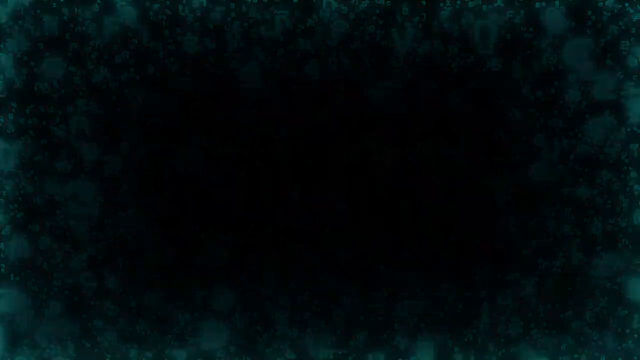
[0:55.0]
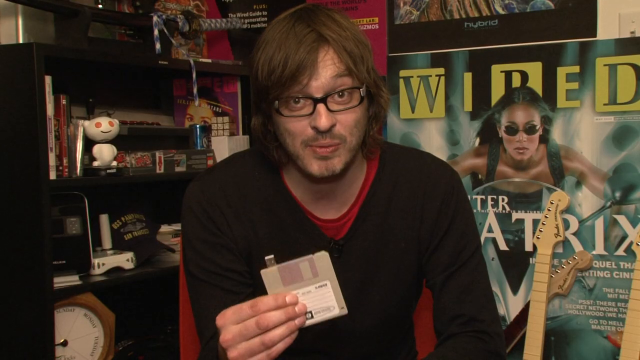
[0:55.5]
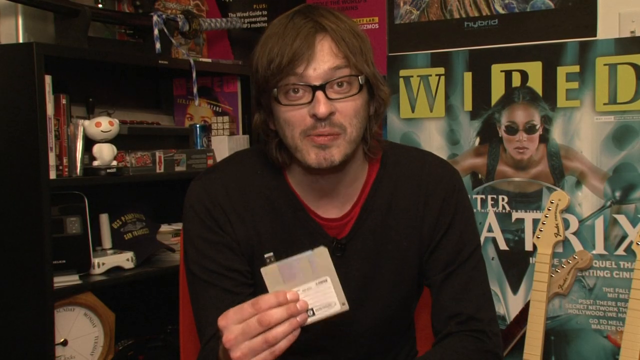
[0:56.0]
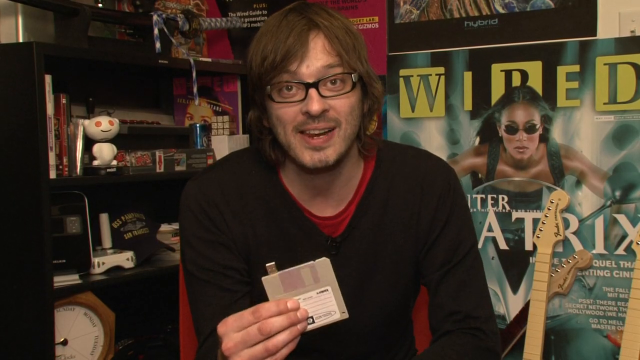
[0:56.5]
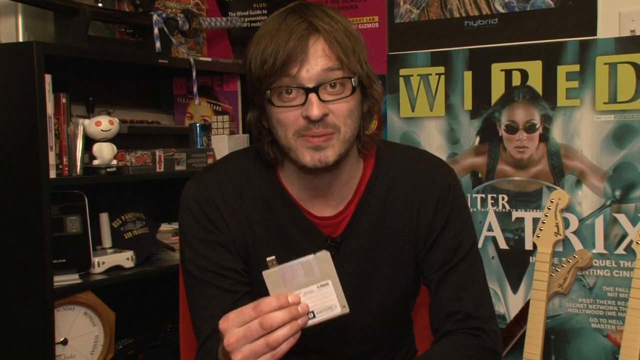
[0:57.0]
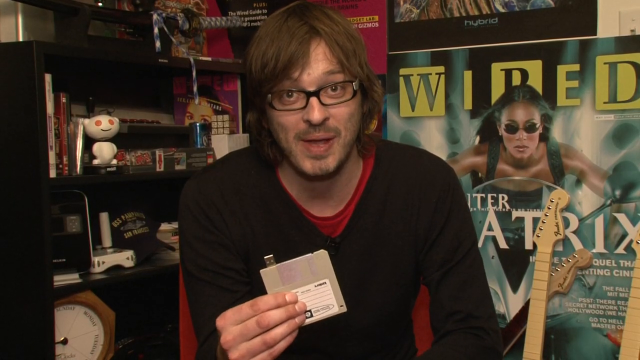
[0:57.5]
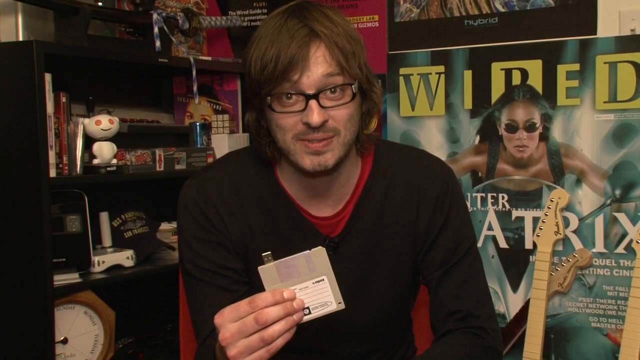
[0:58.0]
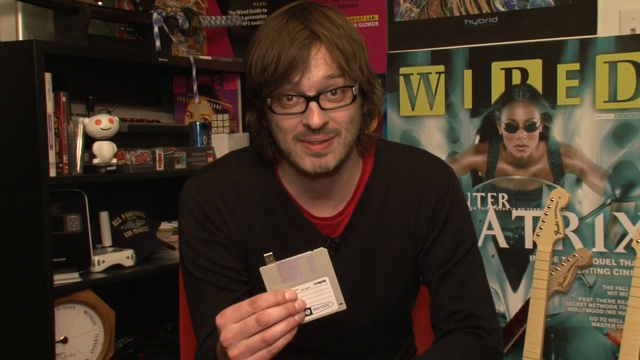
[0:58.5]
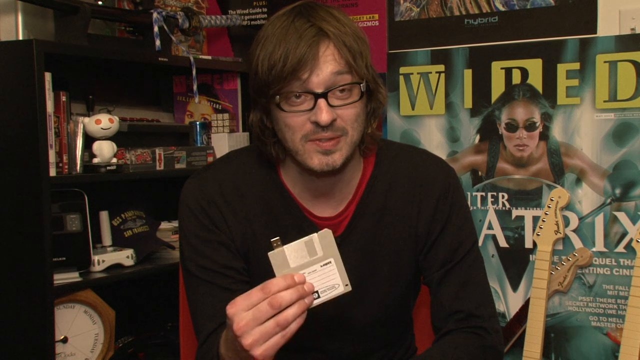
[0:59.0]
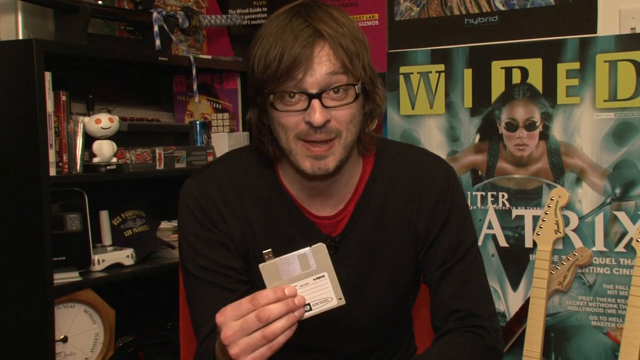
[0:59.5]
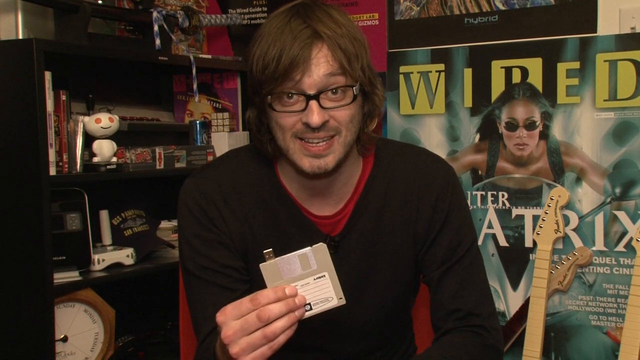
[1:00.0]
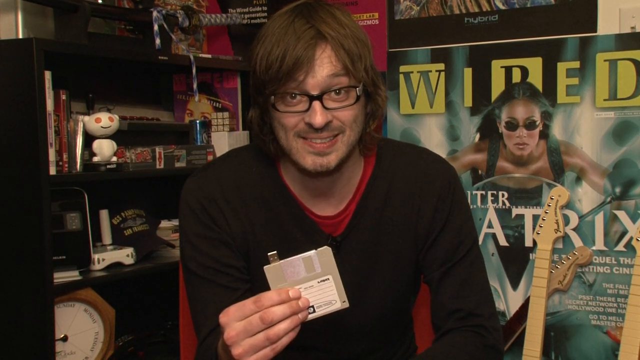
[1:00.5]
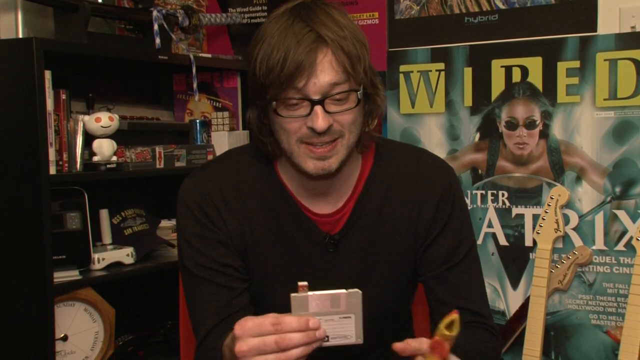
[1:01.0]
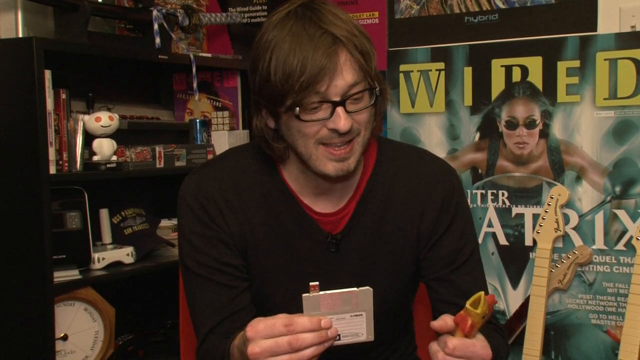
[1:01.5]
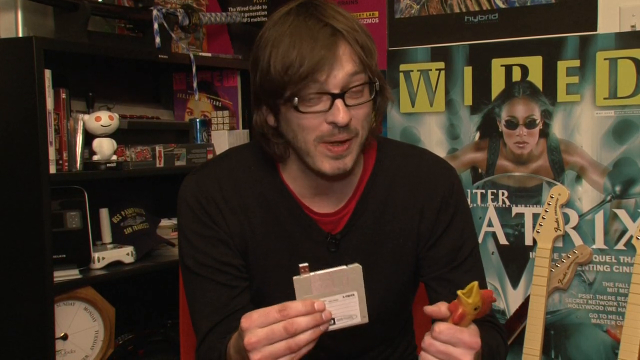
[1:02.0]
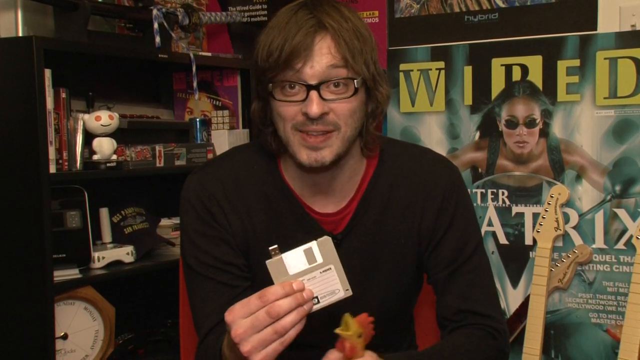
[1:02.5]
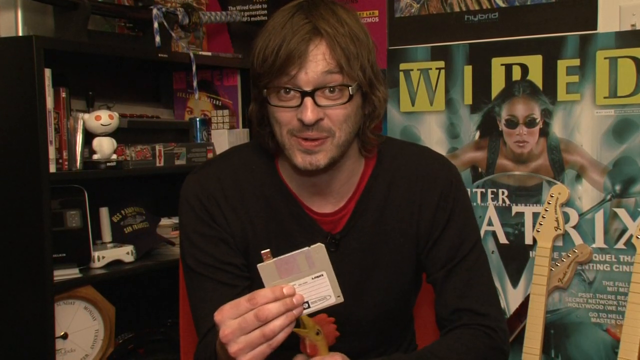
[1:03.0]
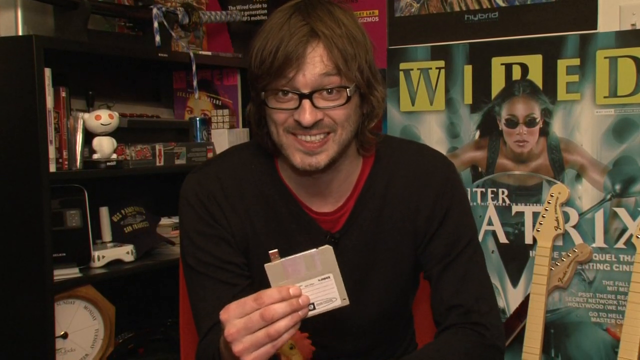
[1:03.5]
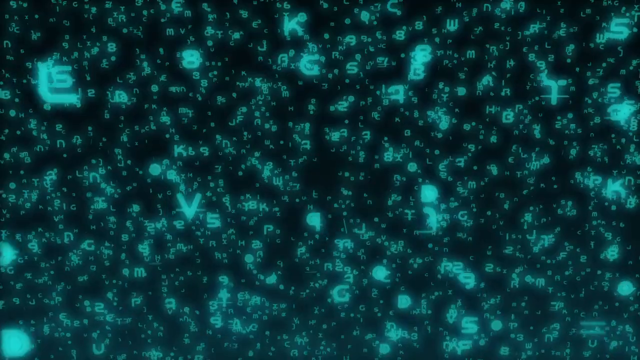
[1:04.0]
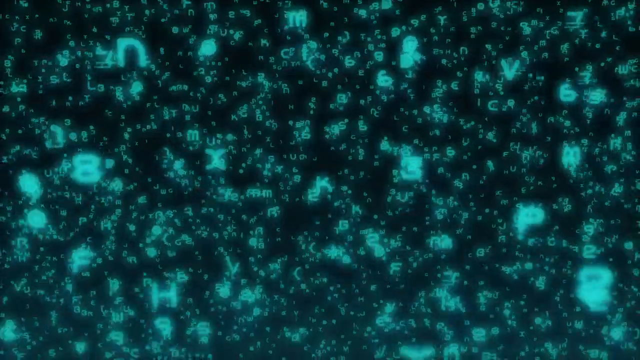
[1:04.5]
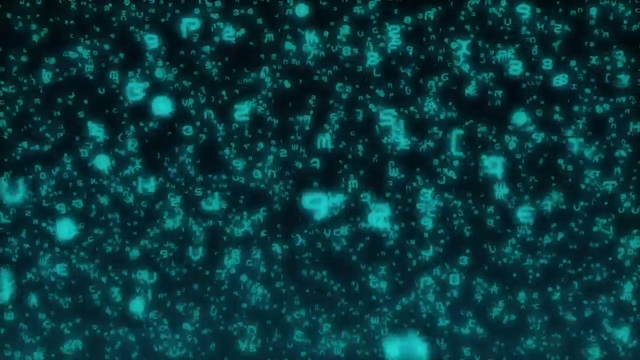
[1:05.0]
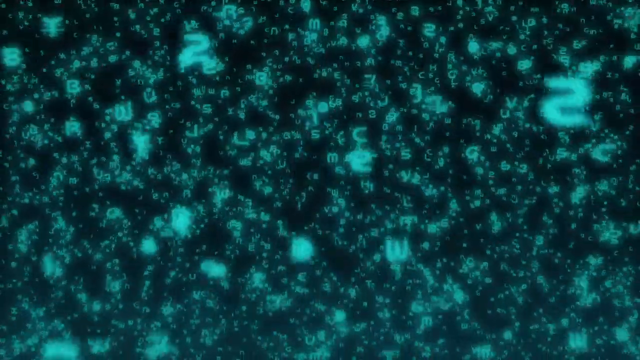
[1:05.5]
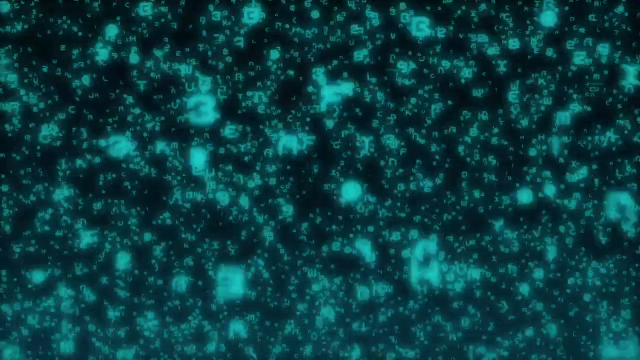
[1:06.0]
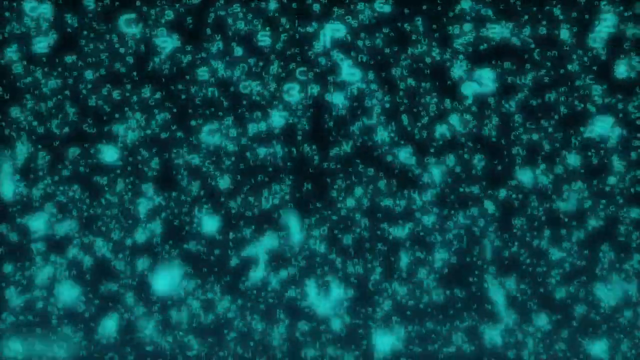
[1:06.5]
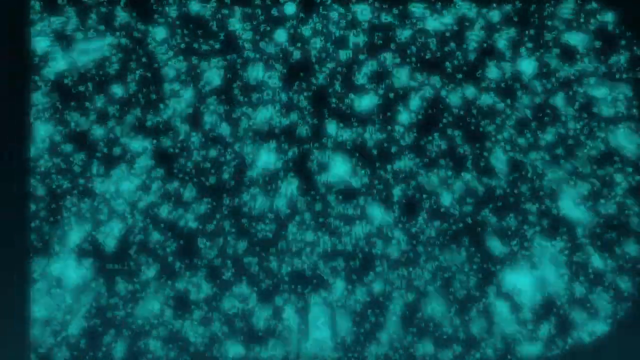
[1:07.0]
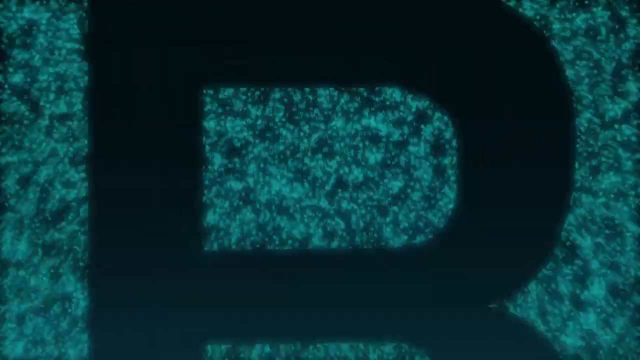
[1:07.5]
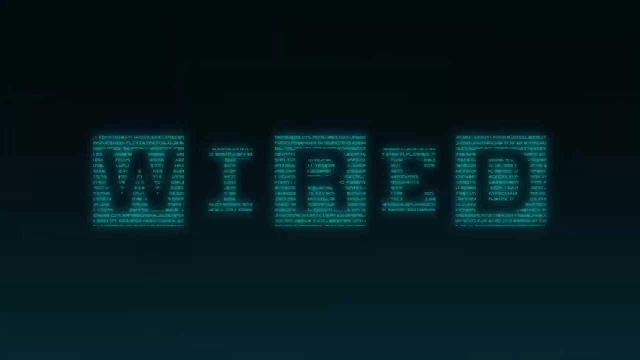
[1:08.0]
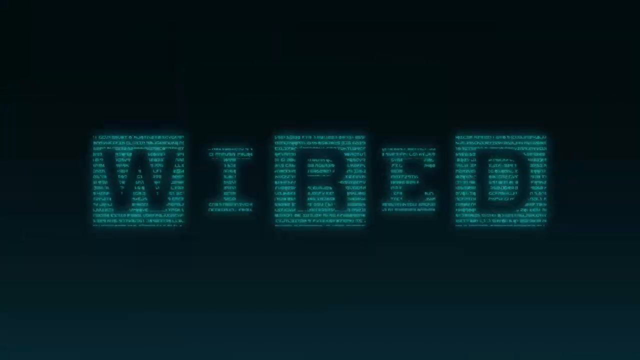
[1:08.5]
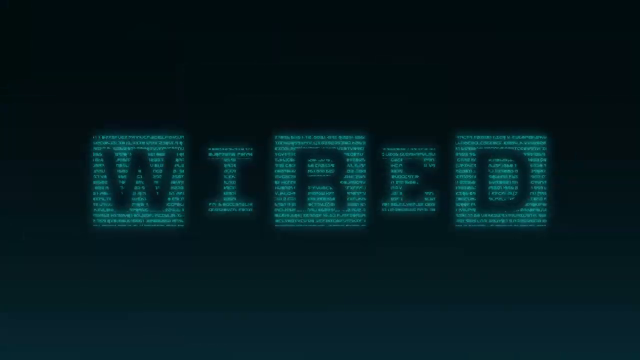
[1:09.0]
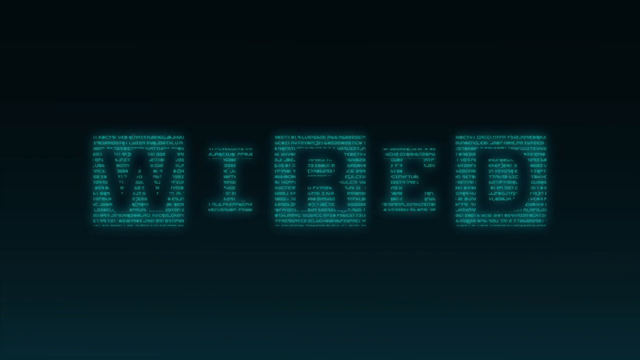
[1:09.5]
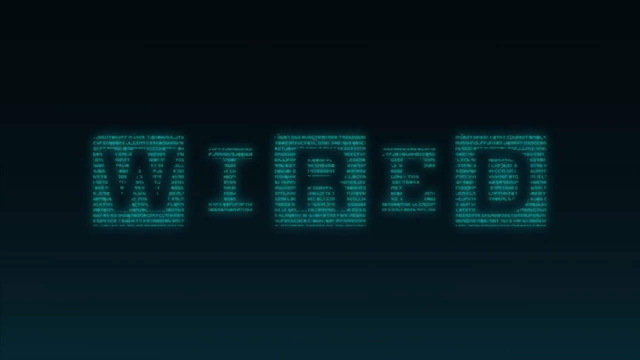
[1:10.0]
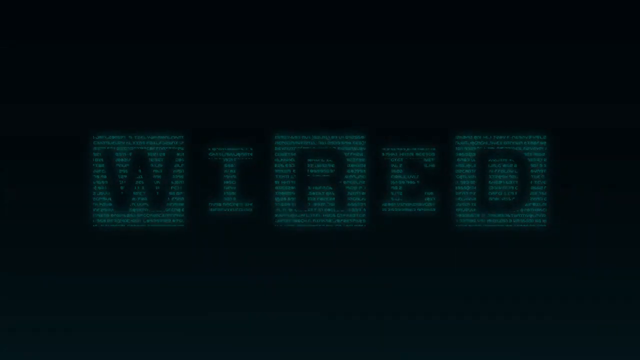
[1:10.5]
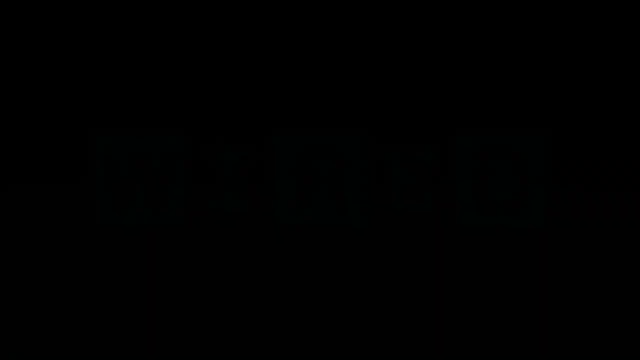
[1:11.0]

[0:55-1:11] A man holds the paper pouch with the USB port in one hand and the toys in the other. Many letters appear on screen, including the letters w-i-r-e-d-u-h. The video is about making a personalized USB stick or USB pouch using the paper box.